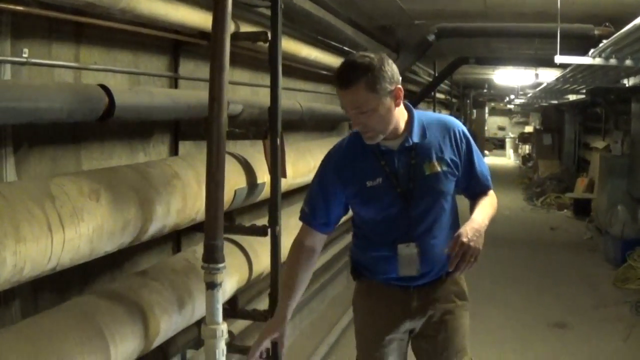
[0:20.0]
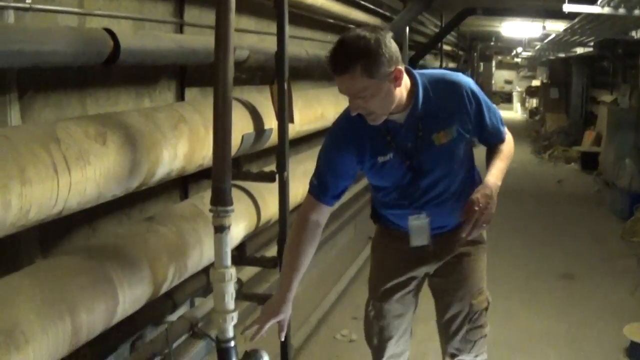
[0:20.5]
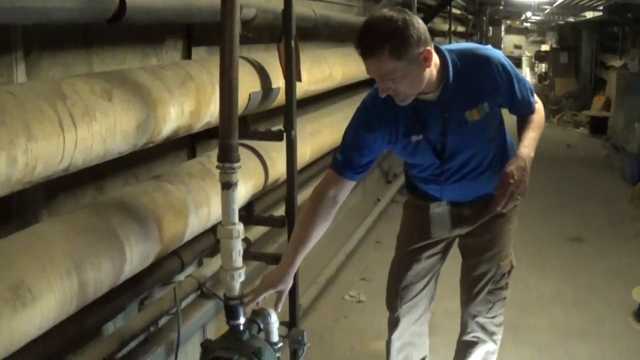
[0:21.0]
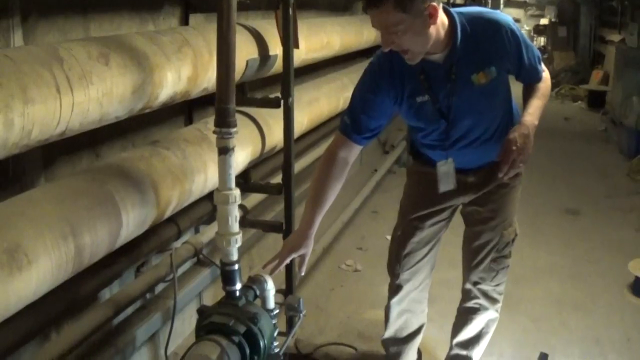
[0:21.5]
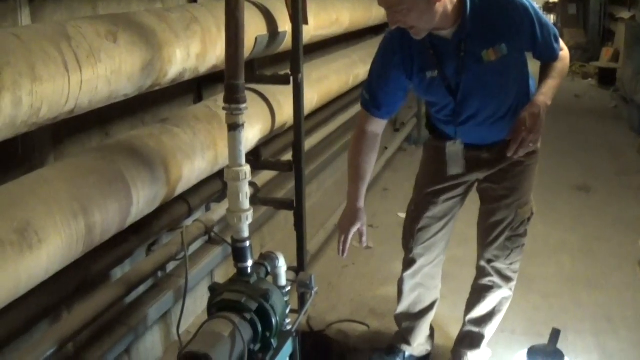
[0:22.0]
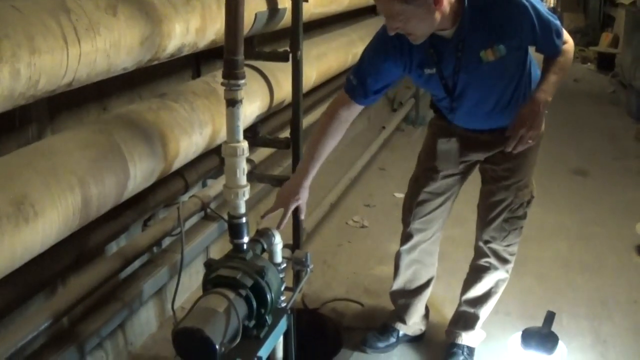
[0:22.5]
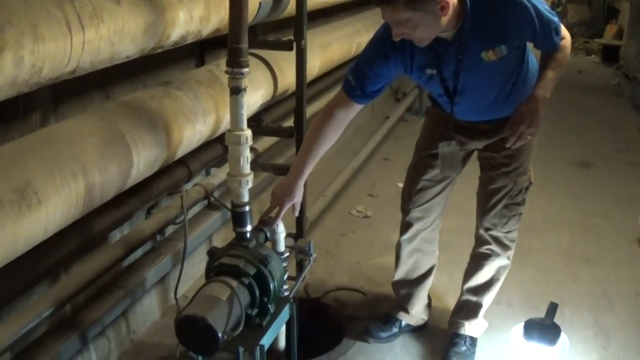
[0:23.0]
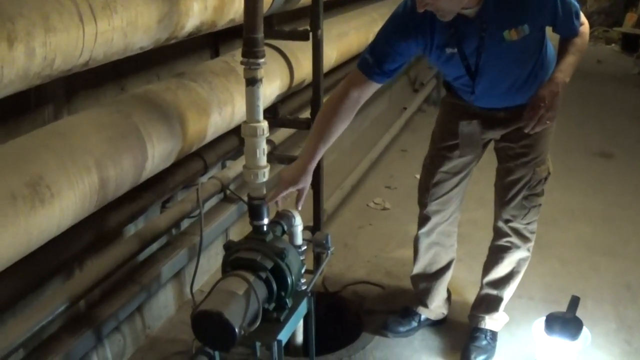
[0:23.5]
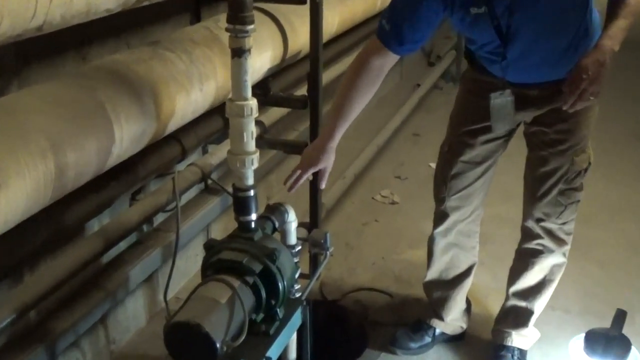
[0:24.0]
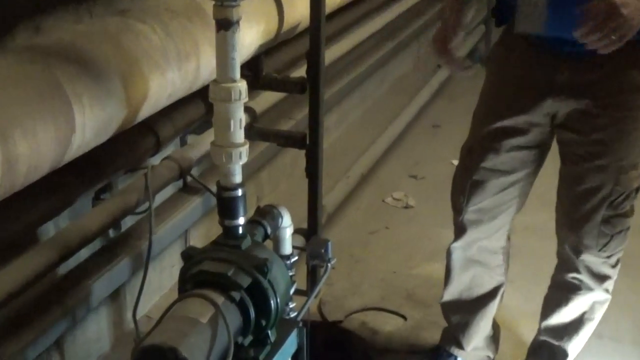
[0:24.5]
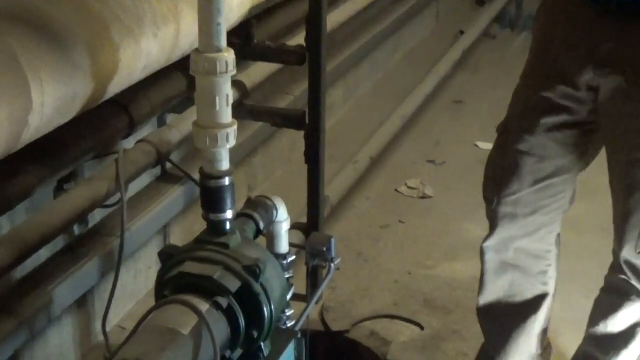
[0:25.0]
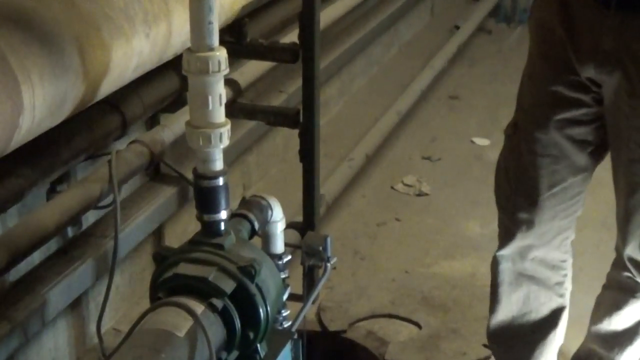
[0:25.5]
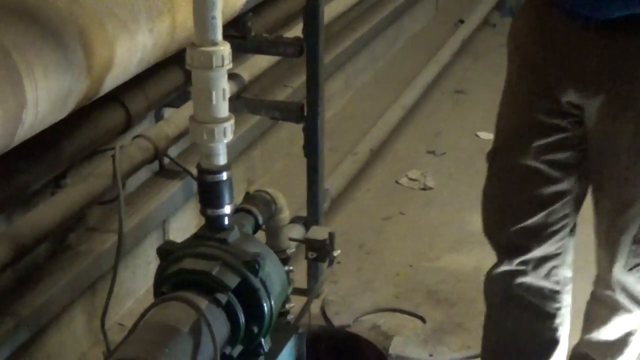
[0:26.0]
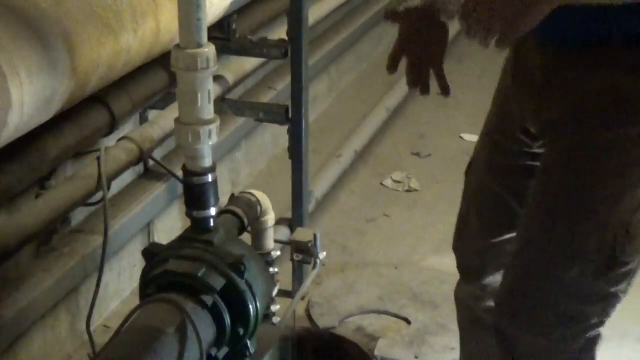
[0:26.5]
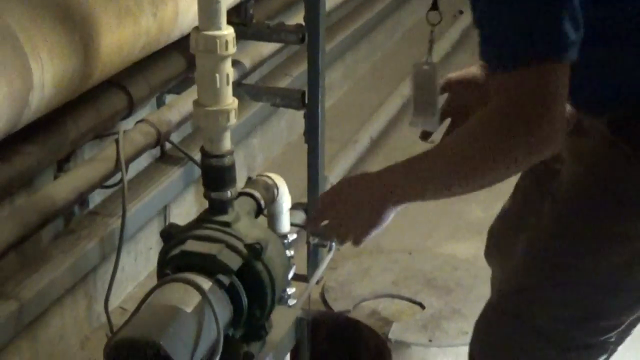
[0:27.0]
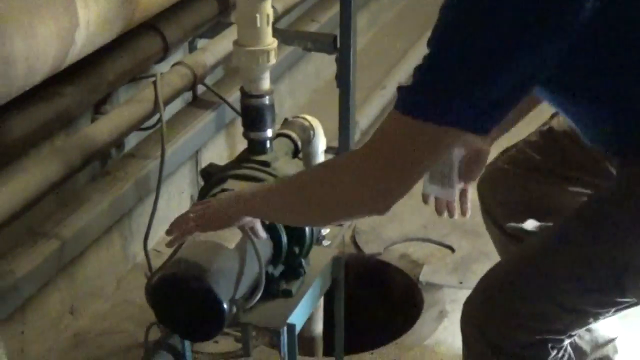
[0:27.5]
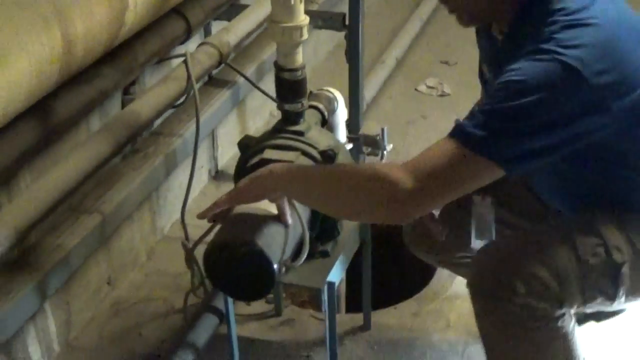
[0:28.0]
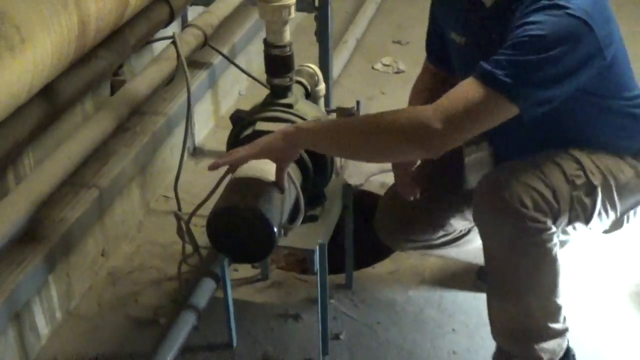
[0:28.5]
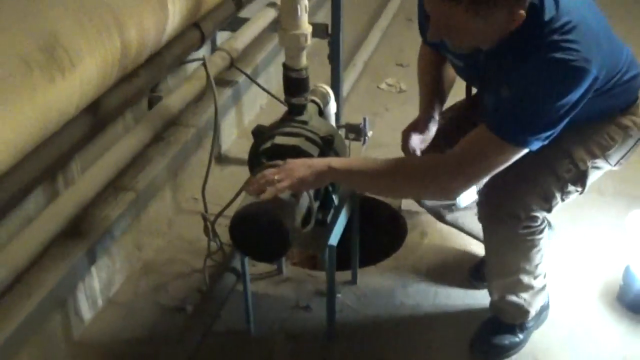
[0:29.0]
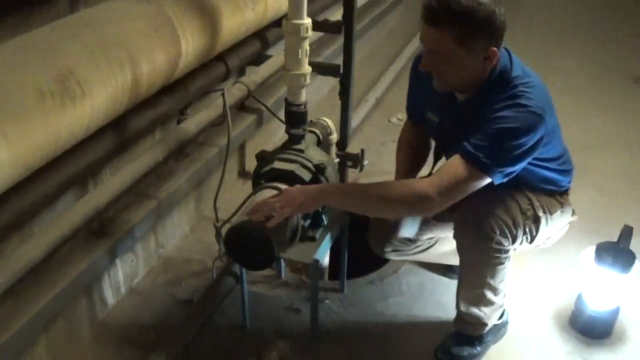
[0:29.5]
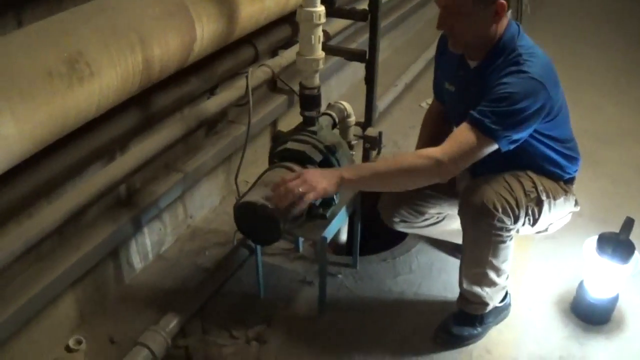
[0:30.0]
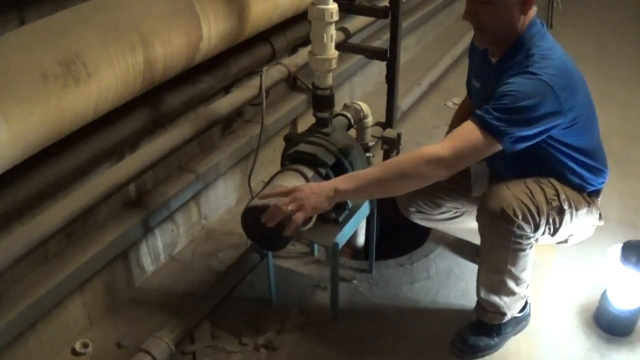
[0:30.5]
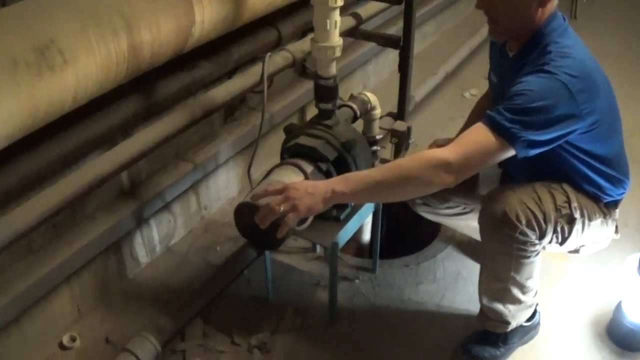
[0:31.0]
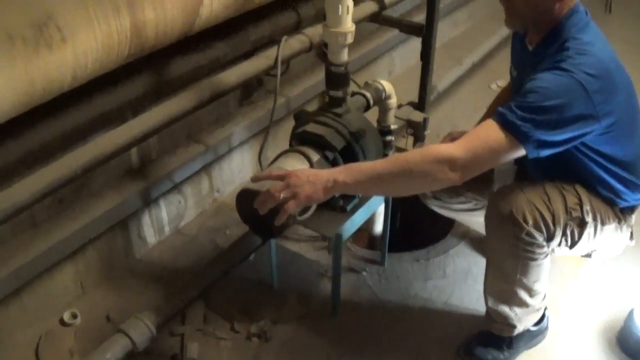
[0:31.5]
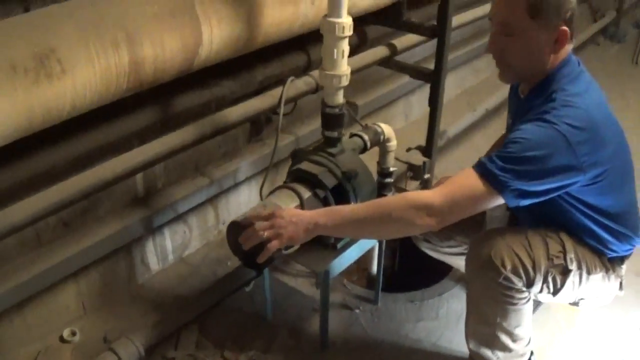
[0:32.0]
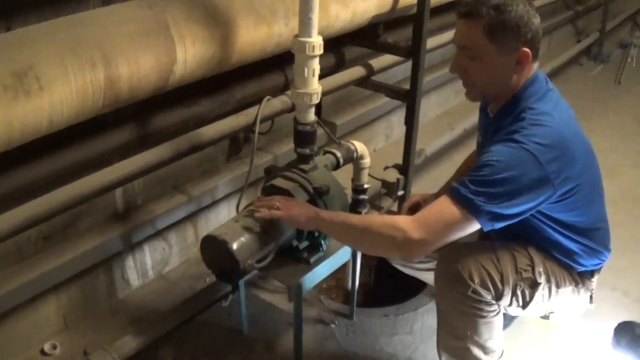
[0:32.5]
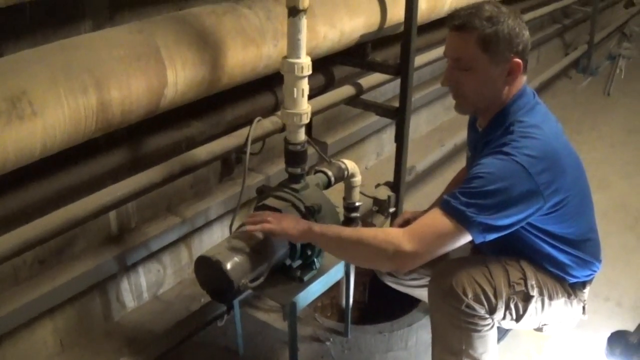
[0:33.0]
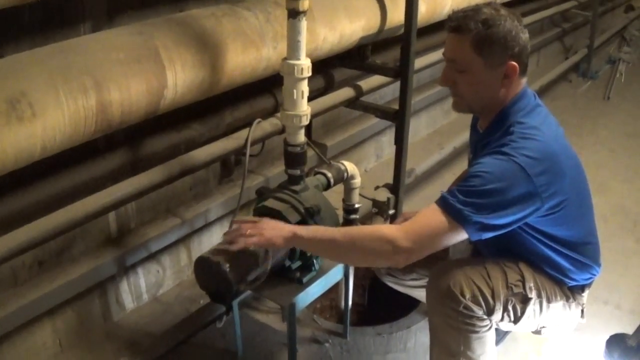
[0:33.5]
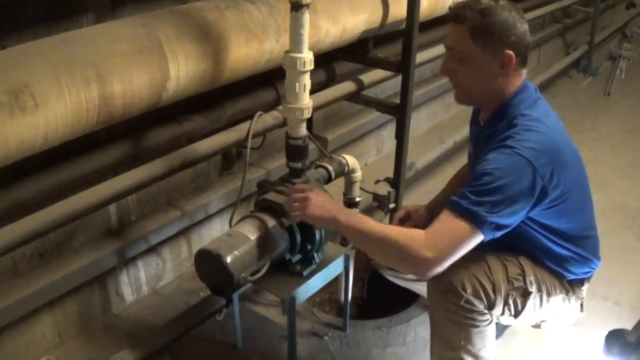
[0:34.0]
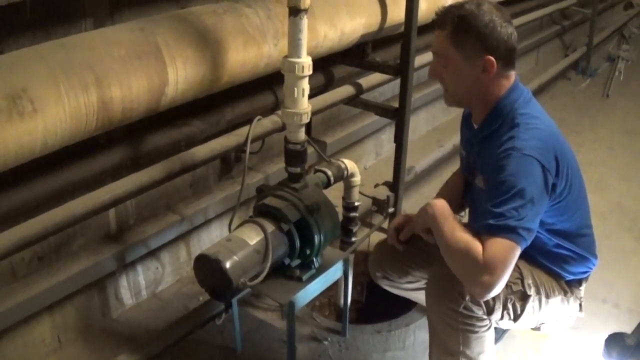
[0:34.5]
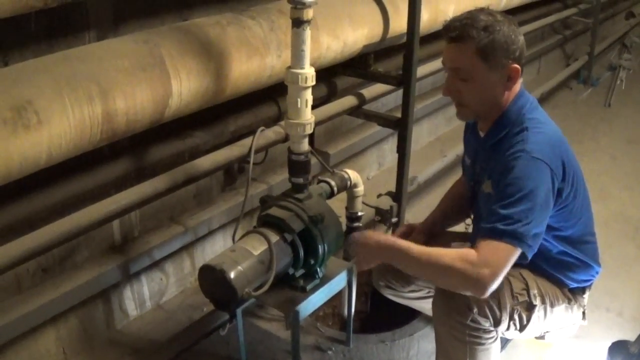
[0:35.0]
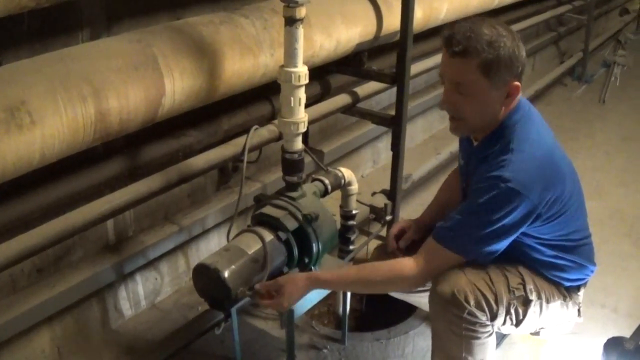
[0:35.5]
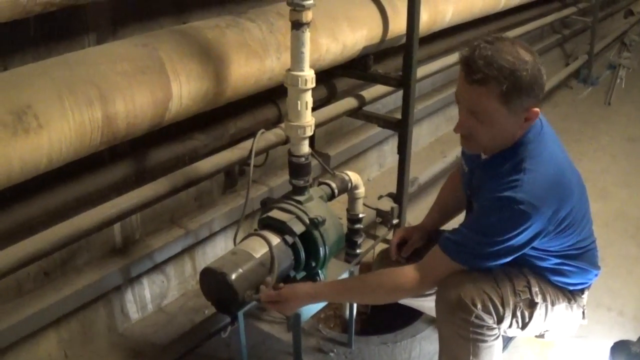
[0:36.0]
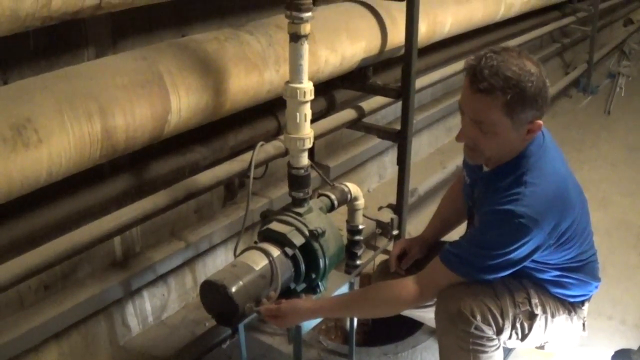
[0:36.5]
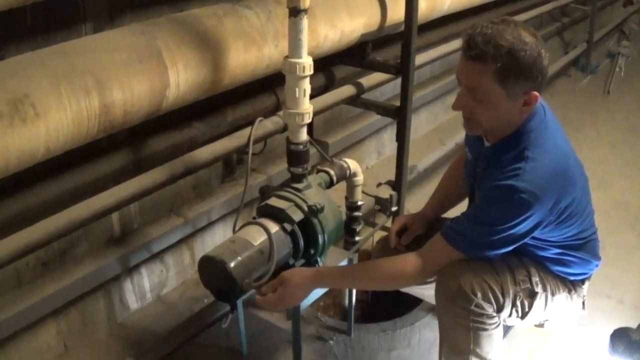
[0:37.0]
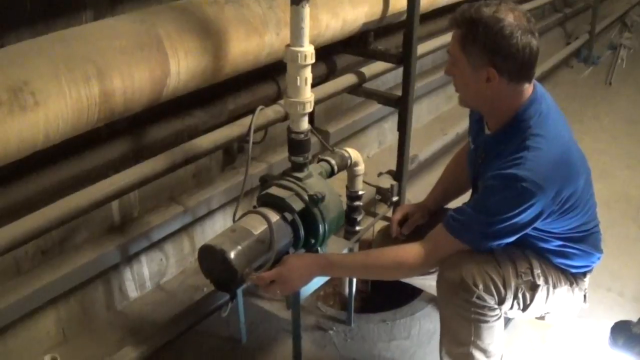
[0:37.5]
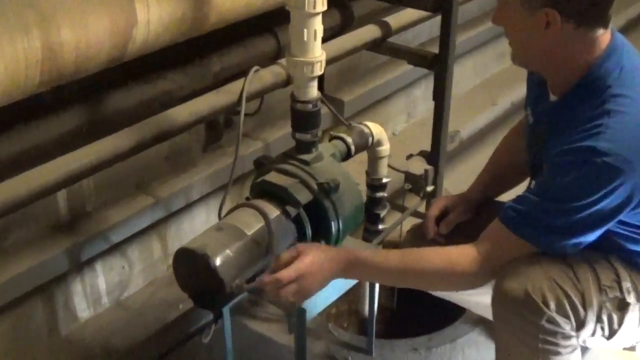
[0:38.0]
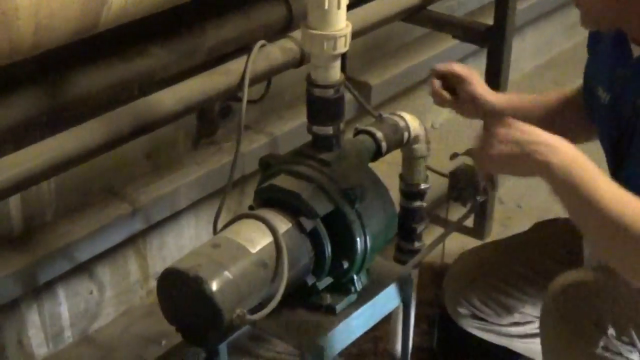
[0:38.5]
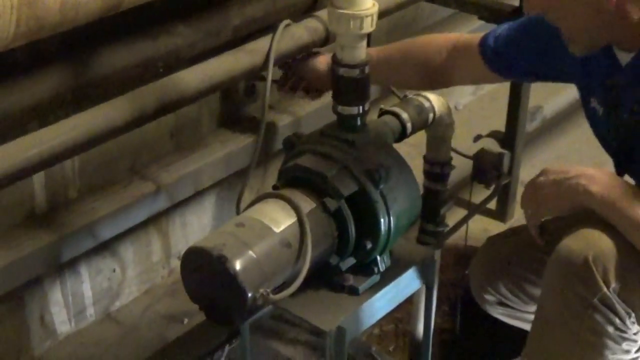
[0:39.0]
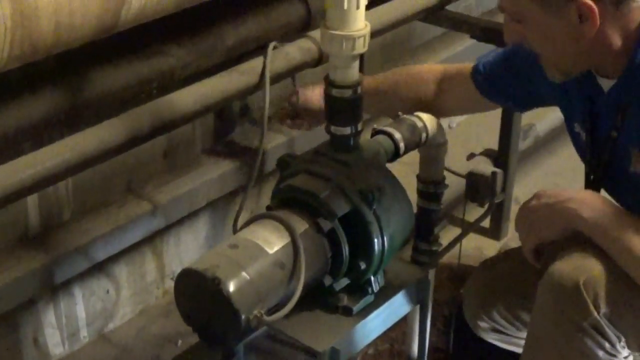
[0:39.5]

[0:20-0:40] The man, still in the blue t-shirt with the badge at his neck and khaki pants, is in the same environment, which resembles an underground area or the basement of a house or structure. There are many pipes, big, thick and small, and white light shines from the ceiling above. At the top right, other pipes are supported by things hanging from the ceiling. The man explains something, then bends down to something that looks like a pump and touches it. The connectors or pipes connecting the pipes to the motor or pump are white and blackish. He squats, touching the motor or pump, tries to explain something, touches the motor and some wires with his left hand, looks at the pipe, and then plugs or unplugs a wire from the socket.